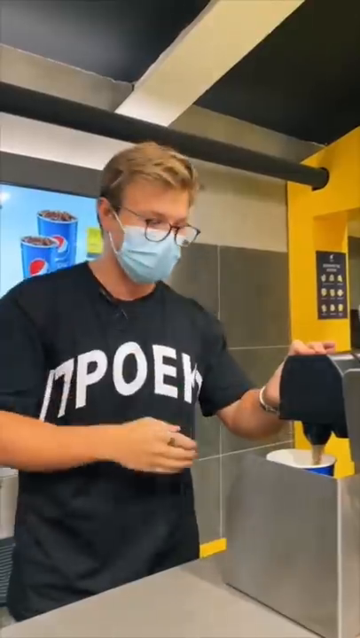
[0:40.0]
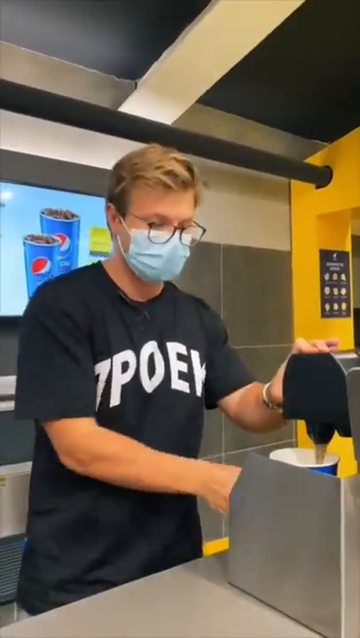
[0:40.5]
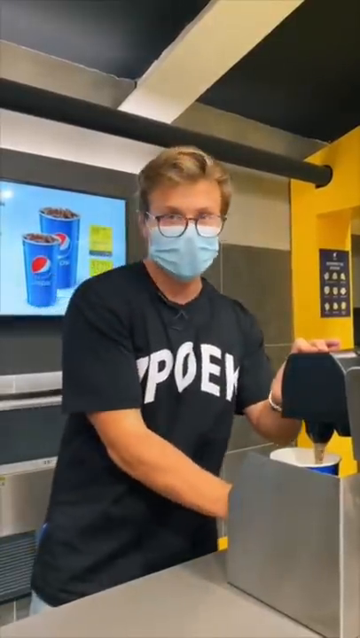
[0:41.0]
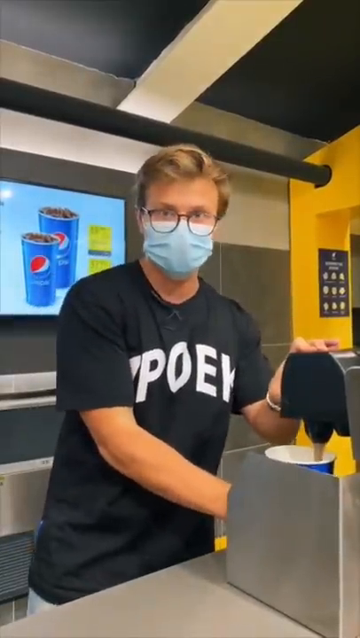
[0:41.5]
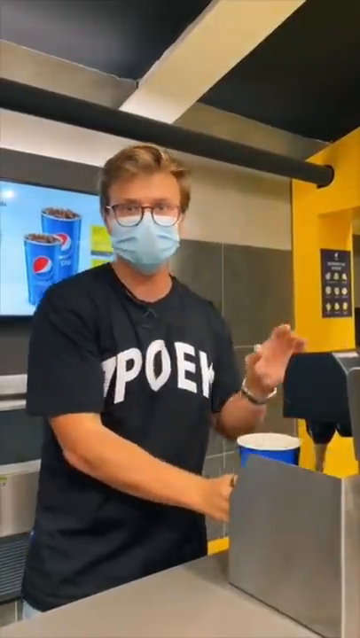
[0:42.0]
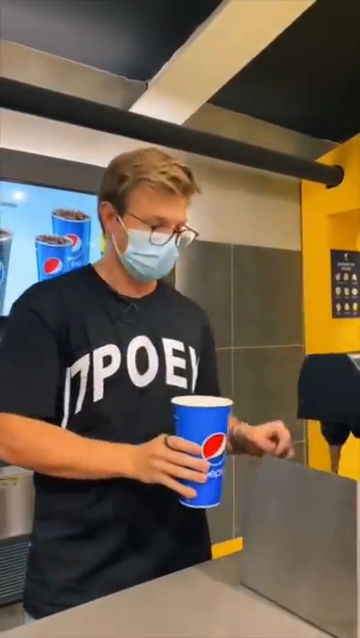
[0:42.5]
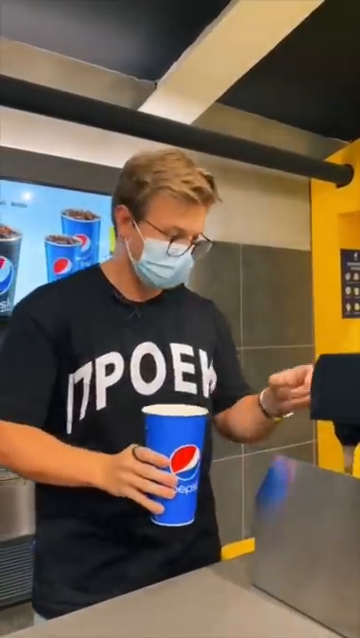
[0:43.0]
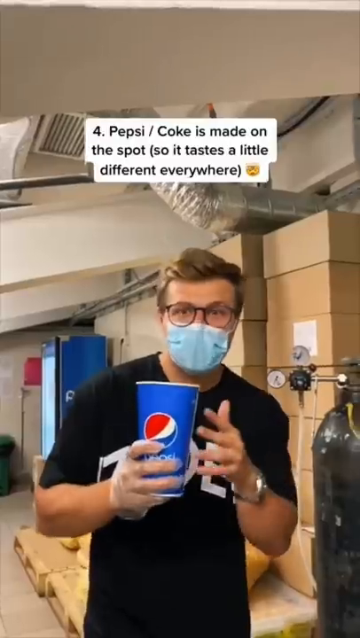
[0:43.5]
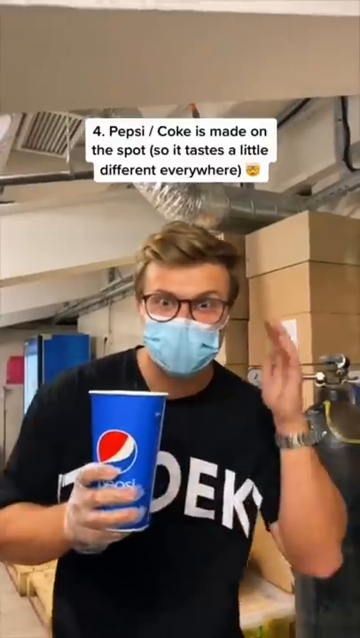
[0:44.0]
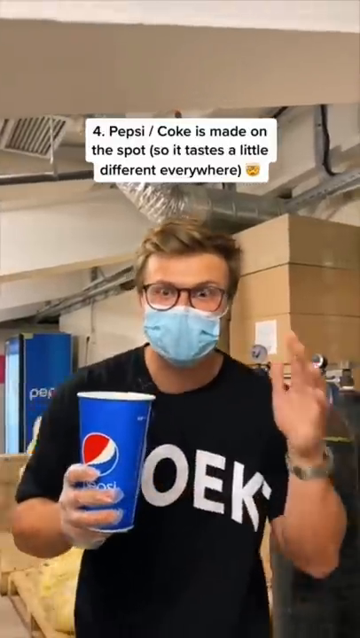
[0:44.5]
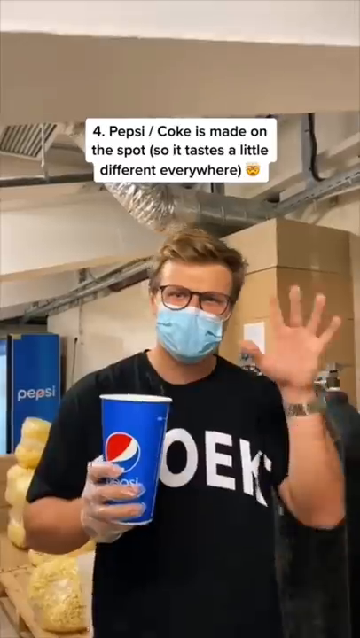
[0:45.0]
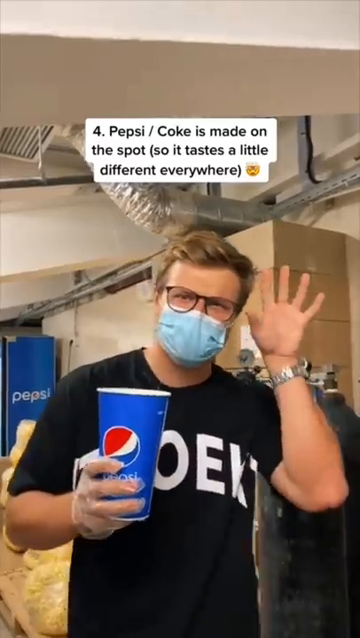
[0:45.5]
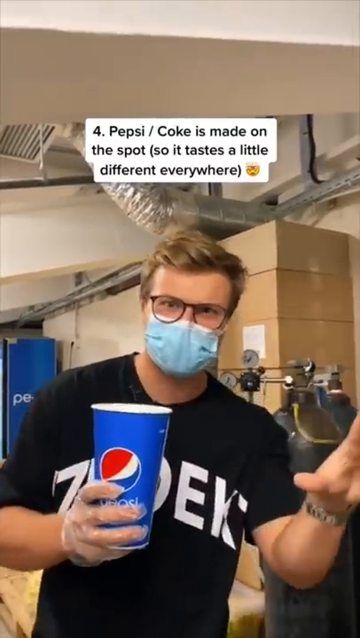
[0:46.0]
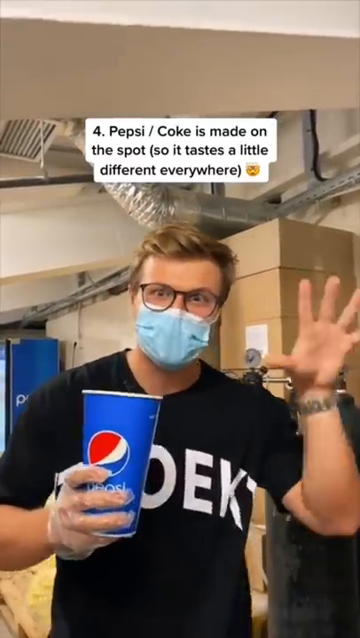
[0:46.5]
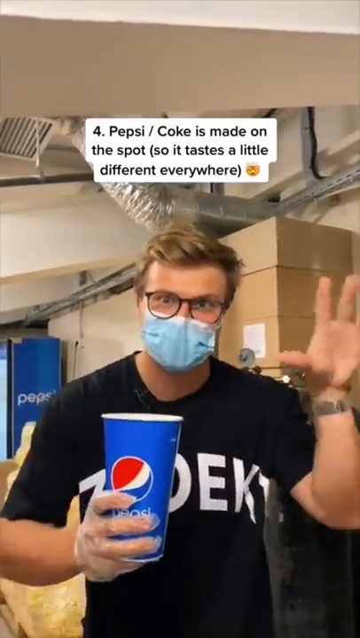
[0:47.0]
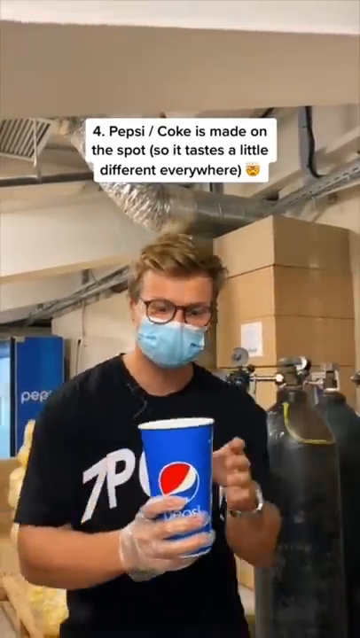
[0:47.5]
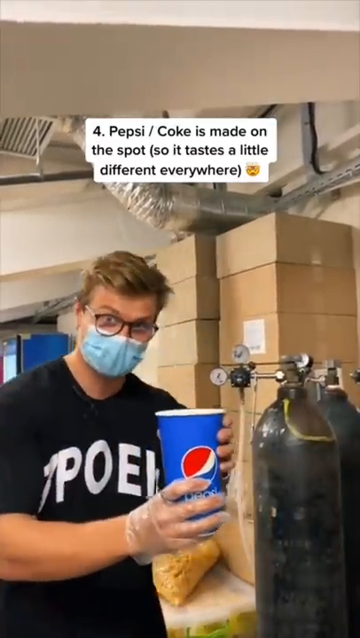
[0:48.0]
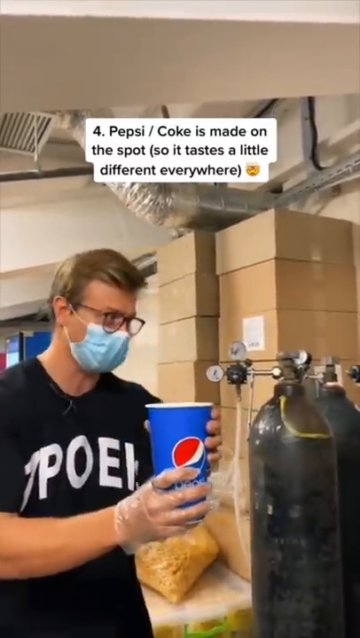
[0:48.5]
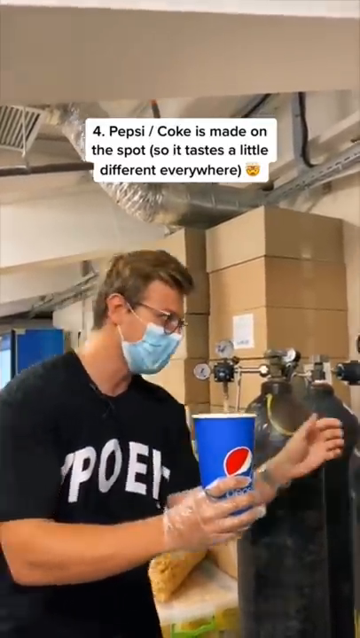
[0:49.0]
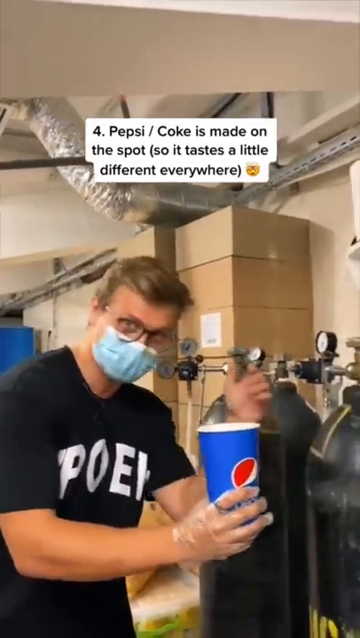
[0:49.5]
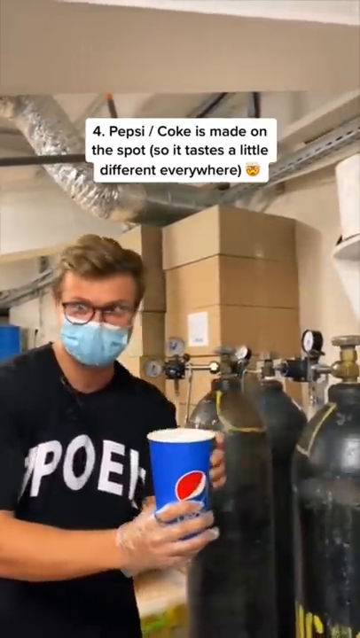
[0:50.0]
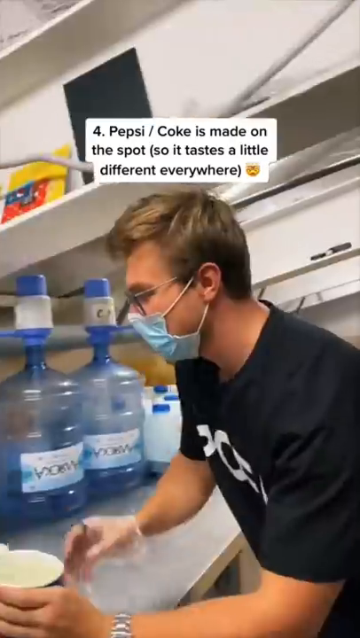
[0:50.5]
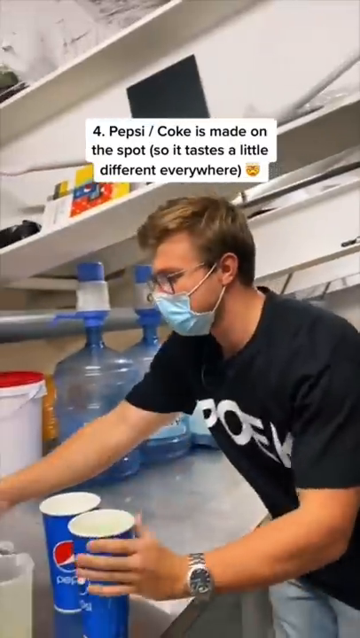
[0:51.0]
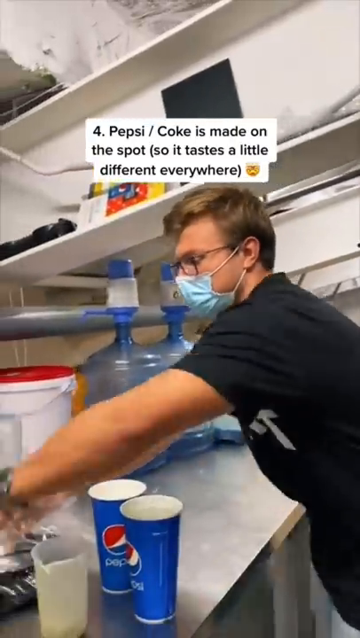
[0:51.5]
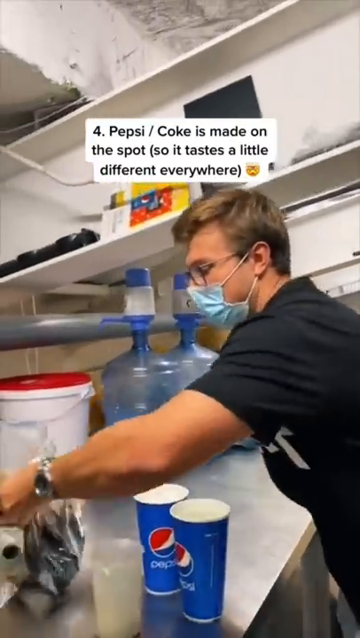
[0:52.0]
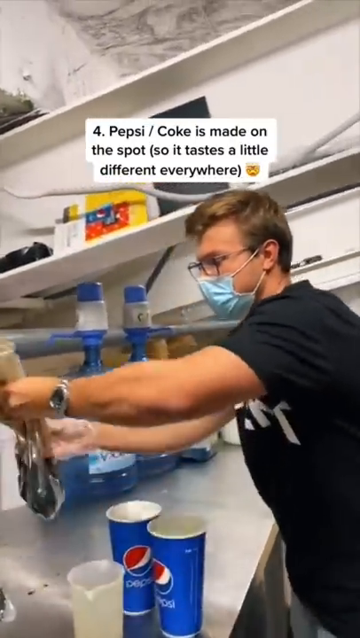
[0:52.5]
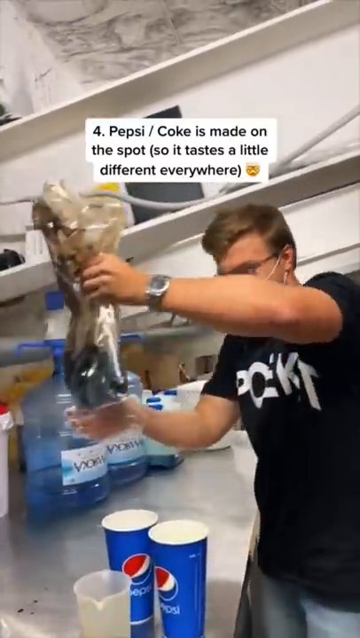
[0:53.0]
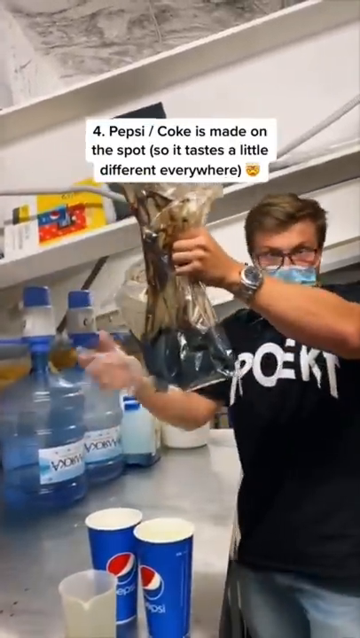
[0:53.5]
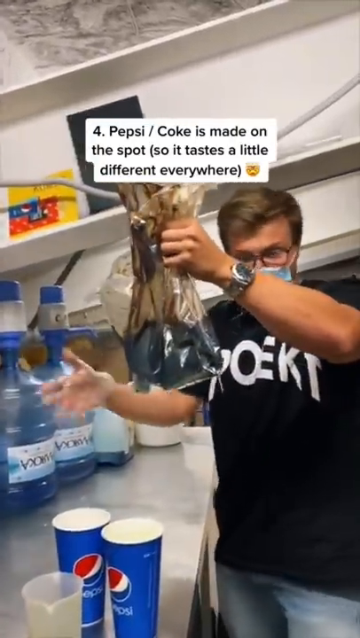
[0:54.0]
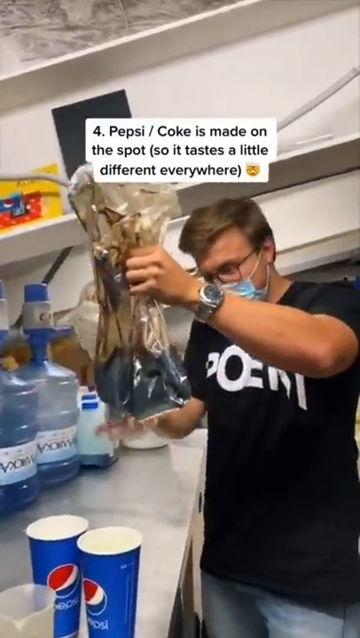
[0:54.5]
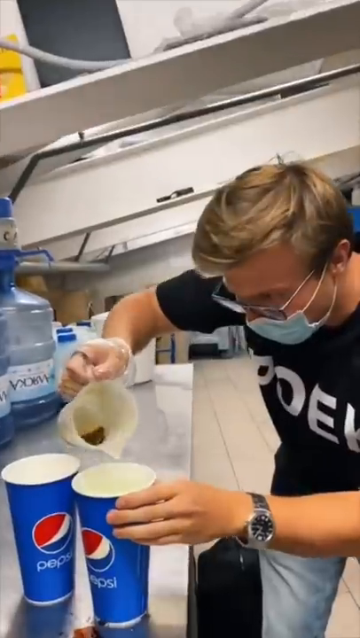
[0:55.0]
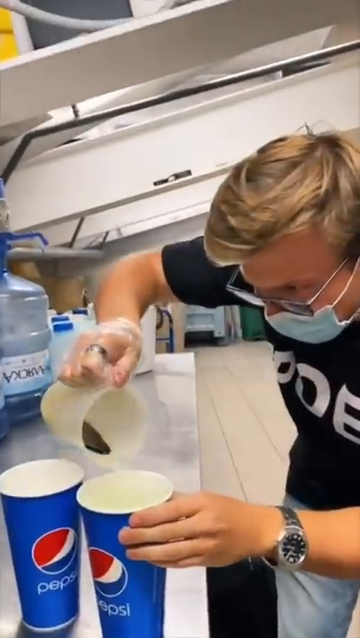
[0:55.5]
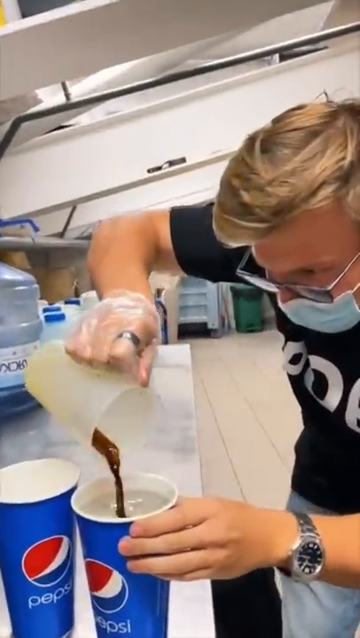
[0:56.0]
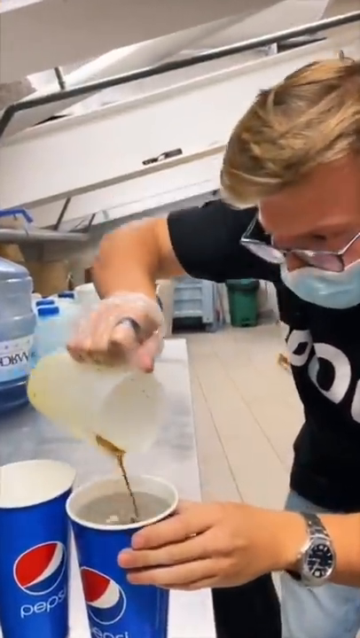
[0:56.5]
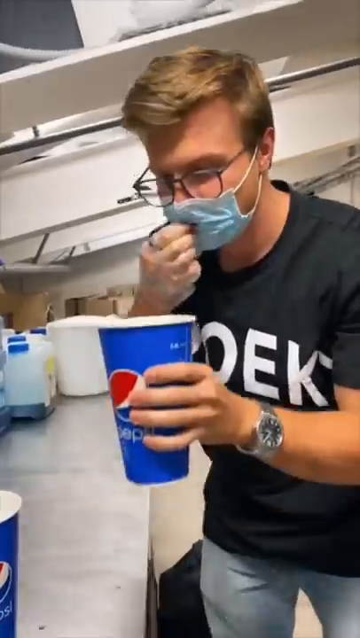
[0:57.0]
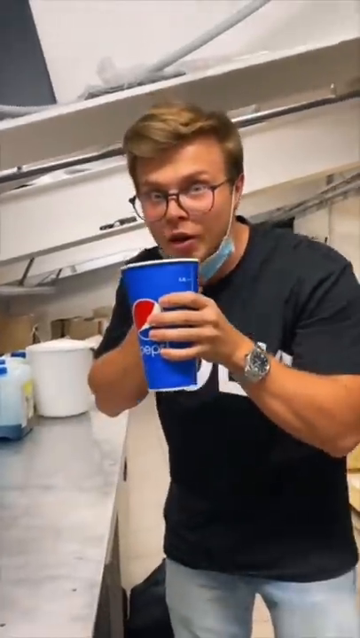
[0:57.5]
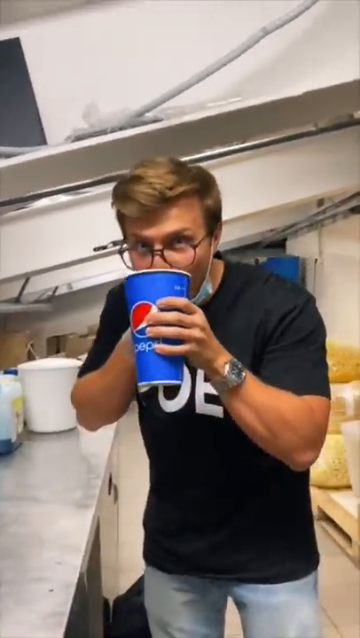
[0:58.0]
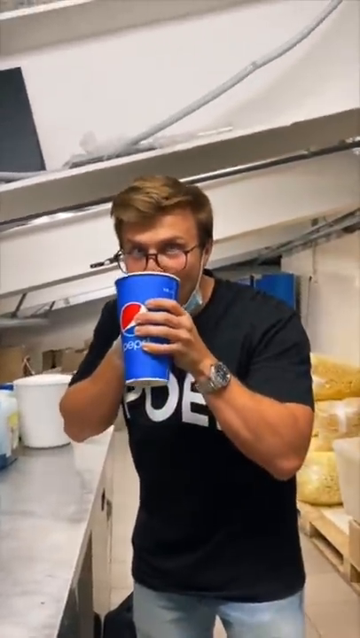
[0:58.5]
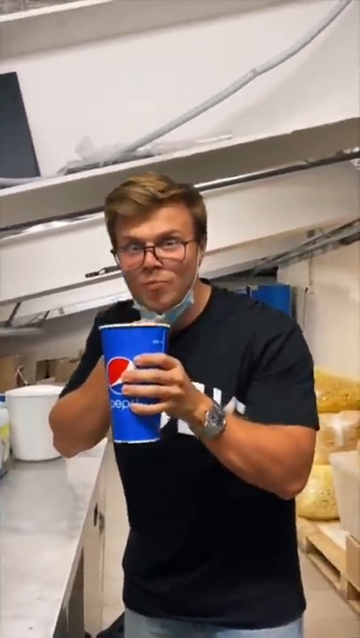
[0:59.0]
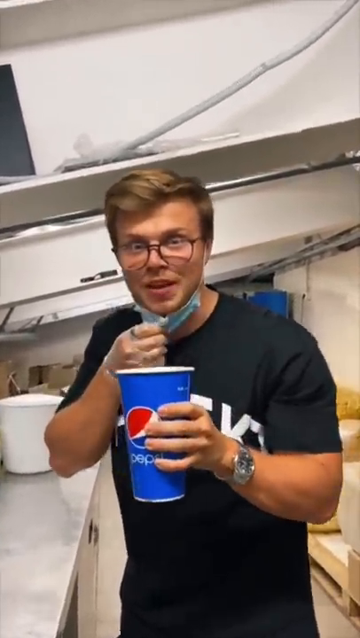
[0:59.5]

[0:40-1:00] The man fills up a soda and looks at it while on-screen text says "Pepsi and coke is made on the spot so it tastes a little different everywhere." He shows a bag of syrup, takes a drink, and reacts as if it is delicious. He mixes things with a big bag of Pepsi syrup, dumping some in and stirring. He is very animated with his hands and wears a glove on one hand. After dumping the syrup in, he drinks again.